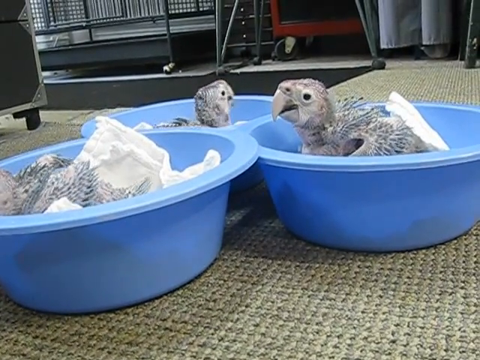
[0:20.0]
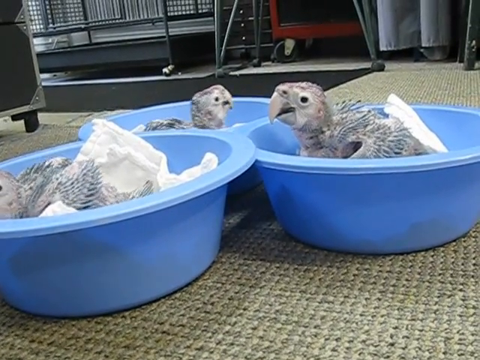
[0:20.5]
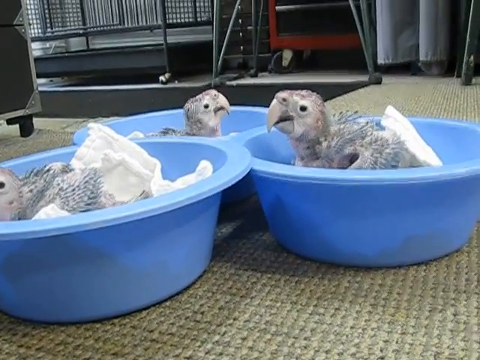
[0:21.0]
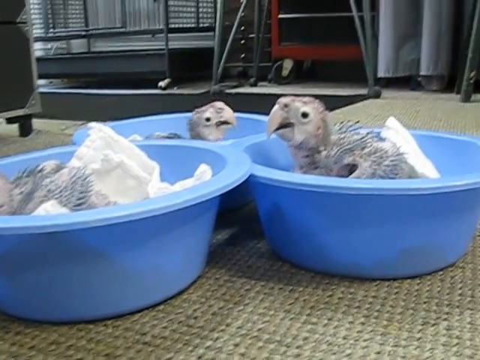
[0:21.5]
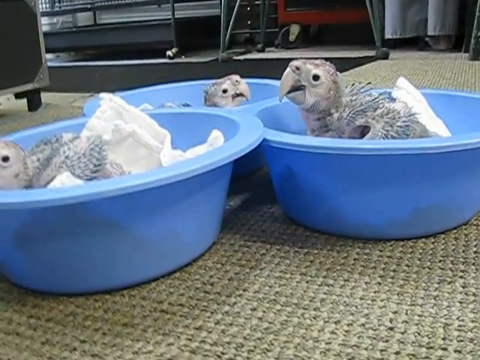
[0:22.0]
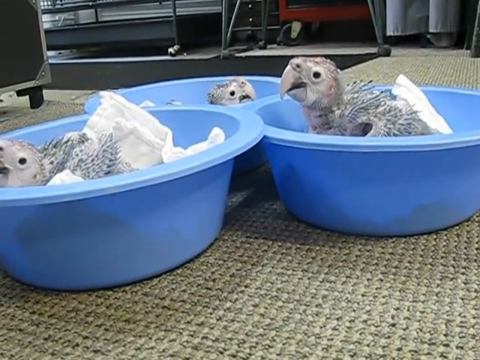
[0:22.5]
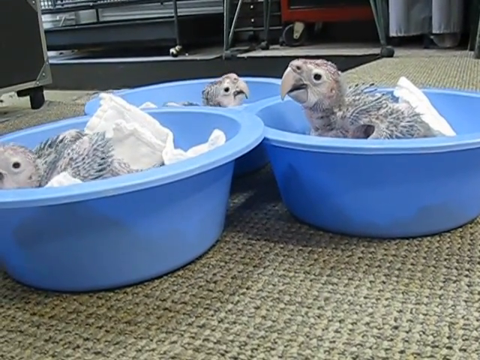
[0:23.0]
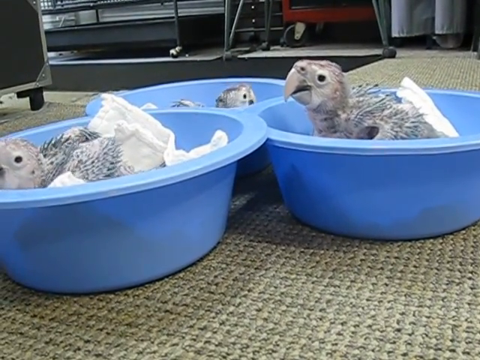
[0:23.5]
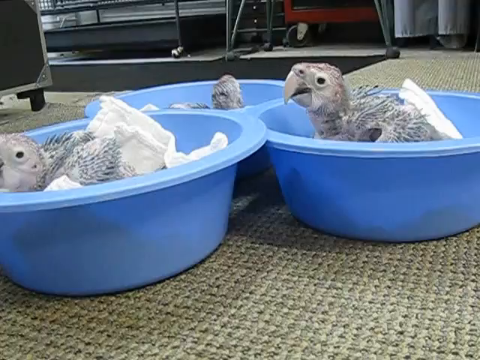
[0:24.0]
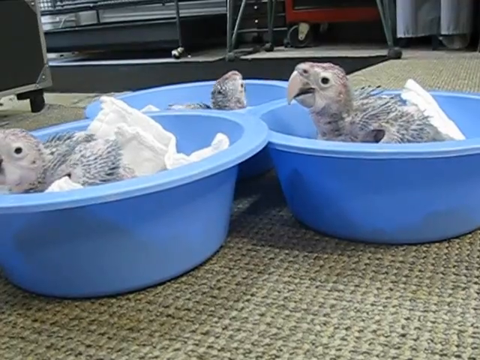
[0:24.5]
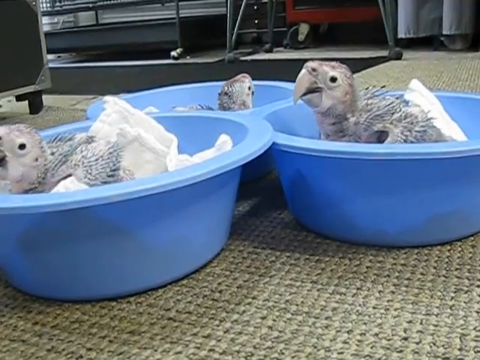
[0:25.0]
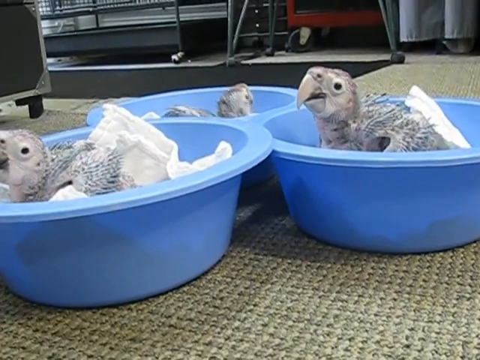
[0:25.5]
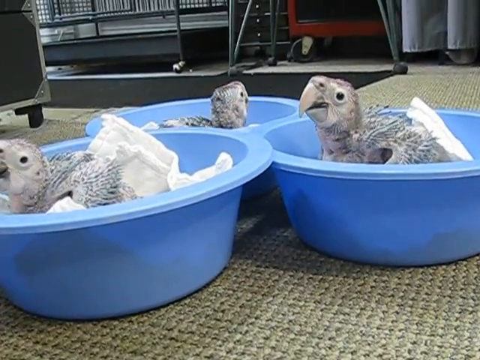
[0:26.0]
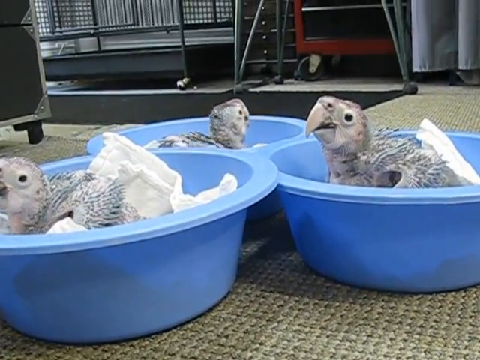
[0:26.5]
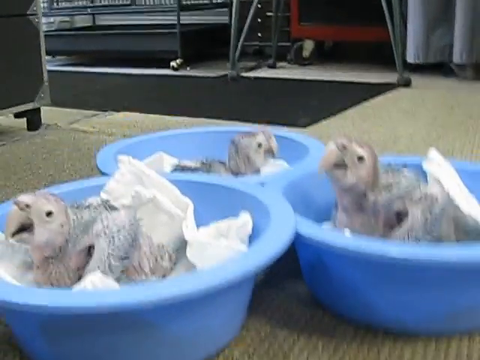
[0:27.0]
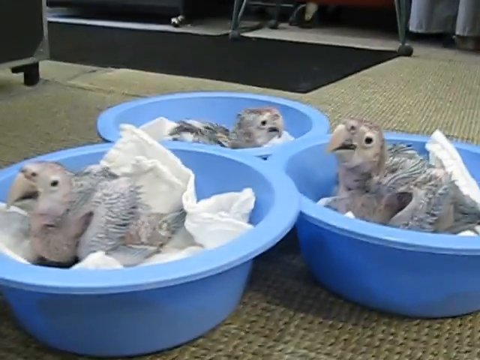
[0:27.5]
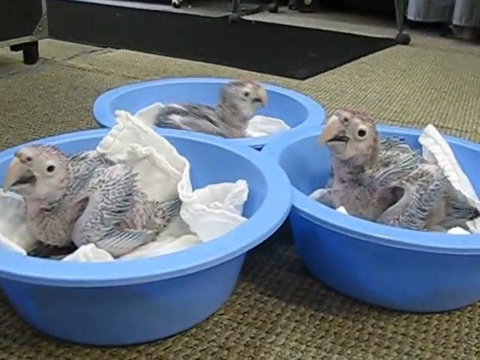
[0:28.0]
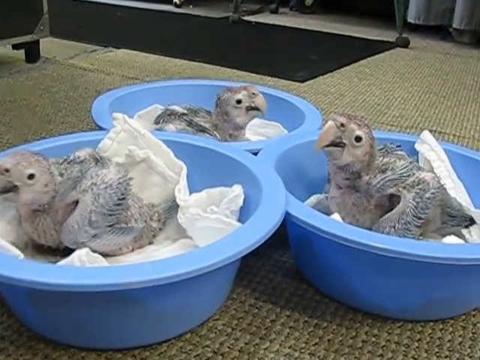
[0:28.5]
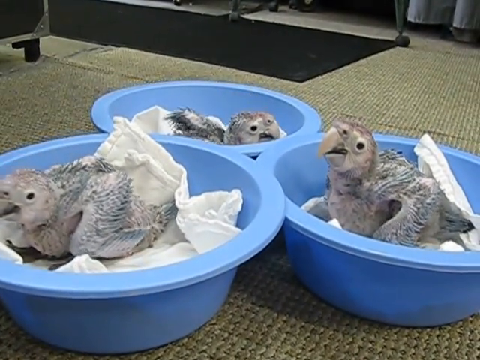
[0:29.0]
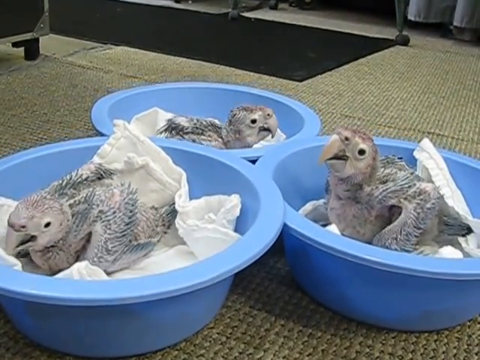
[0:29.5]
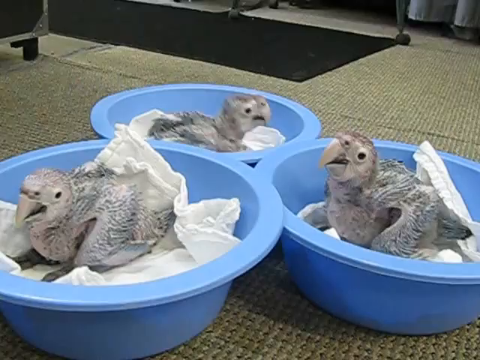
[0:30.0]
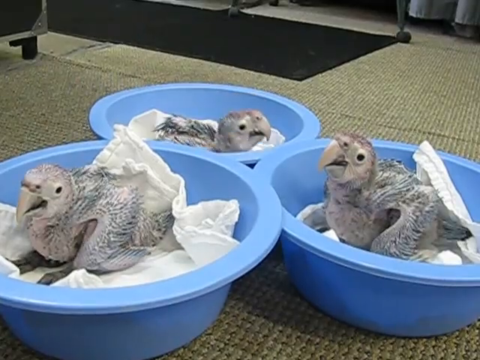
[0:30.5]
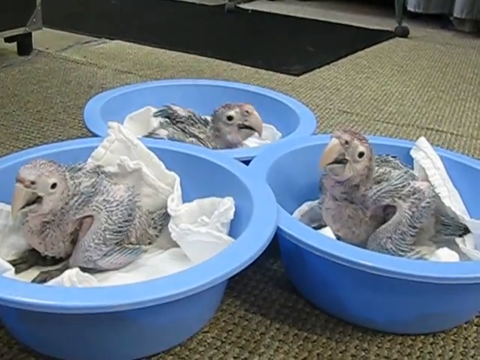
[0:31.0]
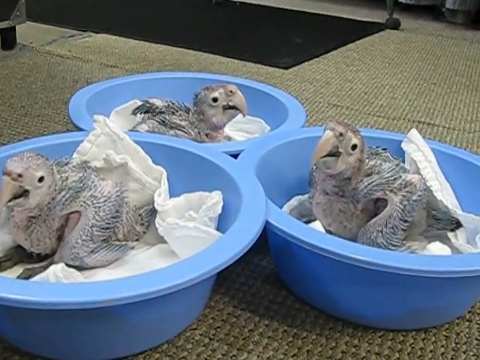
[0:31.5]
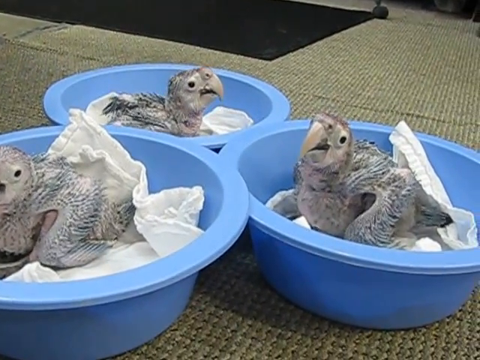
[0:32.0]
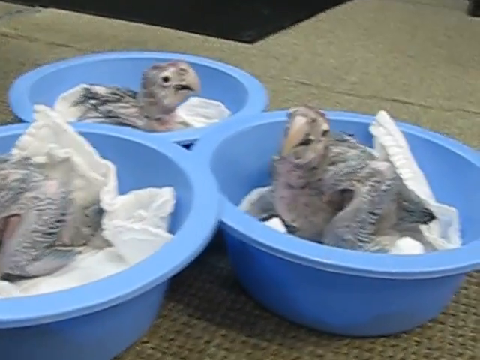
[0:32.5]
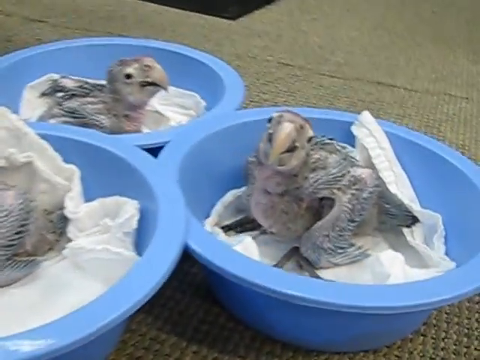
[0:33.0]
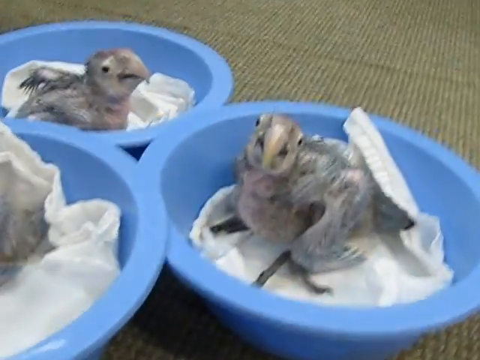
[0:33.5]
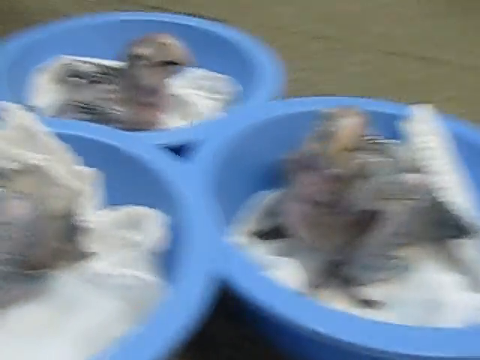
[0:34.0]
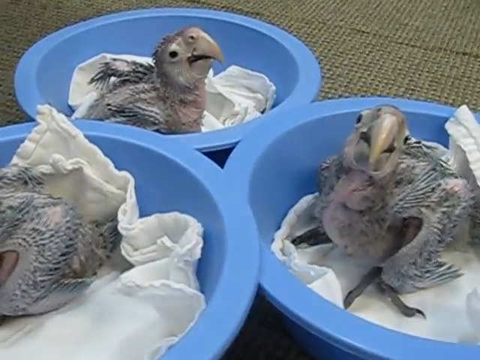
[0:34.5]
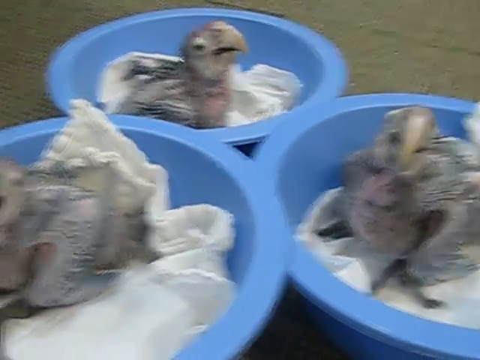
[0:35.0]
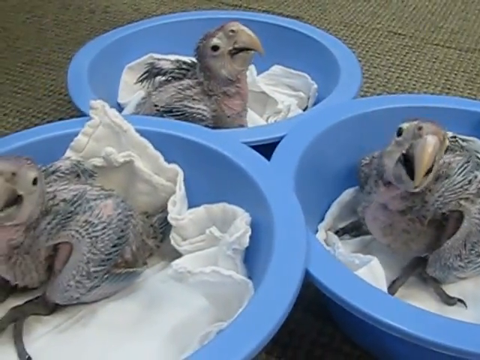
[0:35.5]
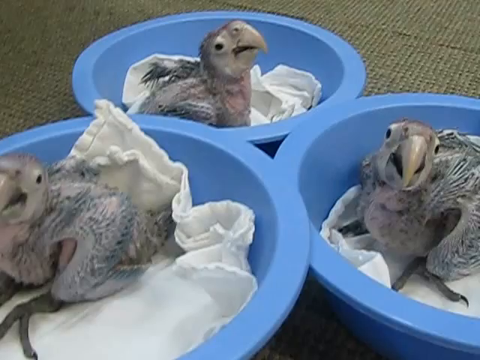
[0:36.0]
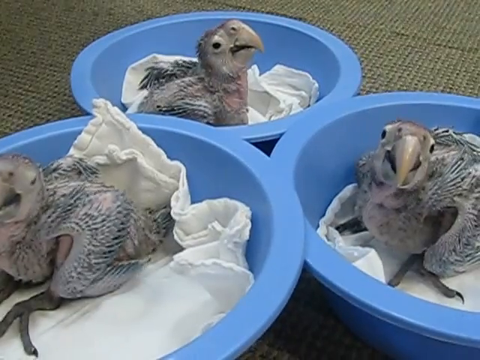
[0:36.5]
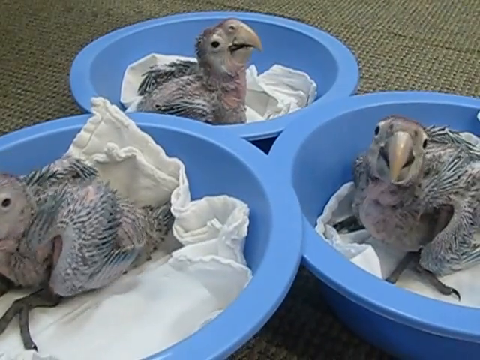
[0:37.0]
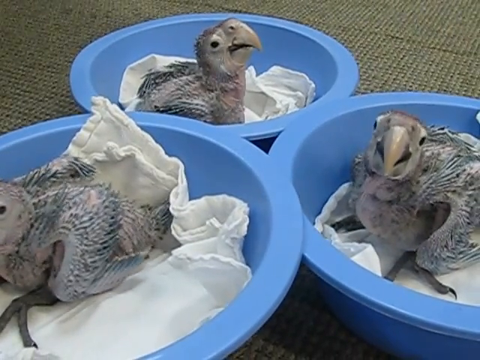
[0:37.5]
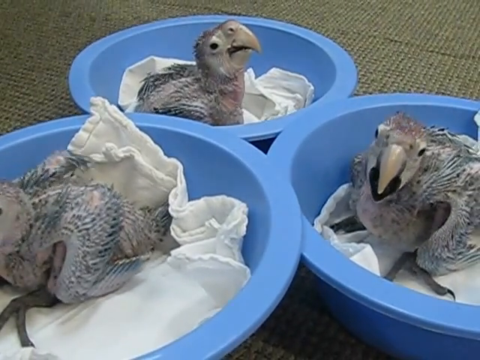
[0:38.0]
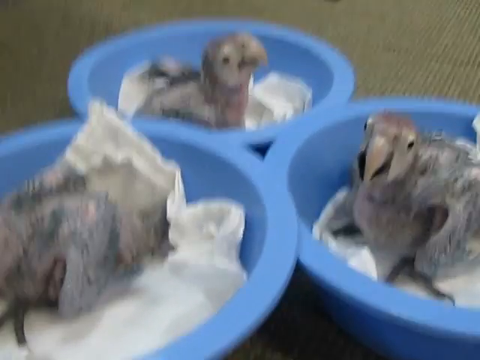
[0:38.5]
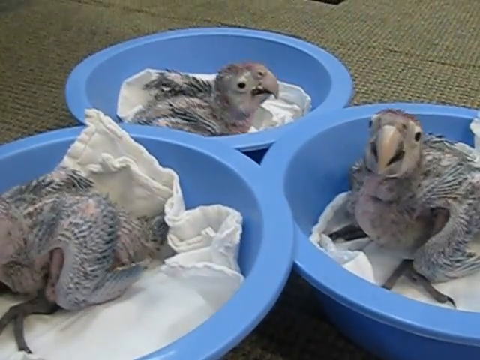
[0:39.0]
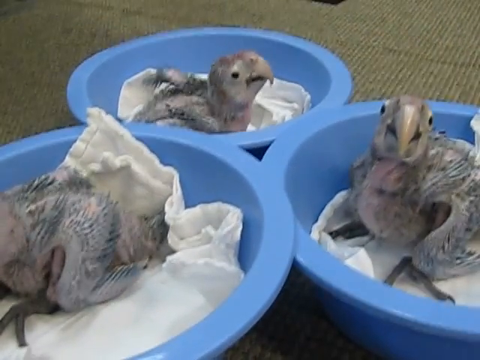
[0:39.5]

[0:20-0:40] The camera seems to be handheld, as the shot moves a little up and down. In the background are a black box, black floors, the metal cage and another black box with a red outline. Under the three blue buckets is some type of brown rug, and inside each bucket is a white blanket. The camera then moves up a bit, showing a different angle where the entirety of the buckets can be seen, giving a better look at the three birds: their beaks are quite long, they are full of white and black feathers, and their chest and belly almost seem pink. As the camera zooms into the right bucket, that bird seems to be looking at the person filming and opens its beak, so it is probably making some sort of noise.